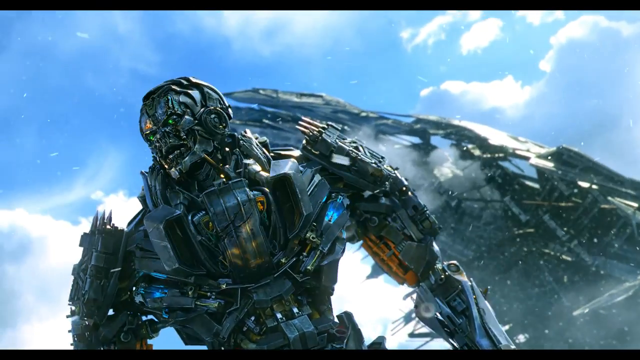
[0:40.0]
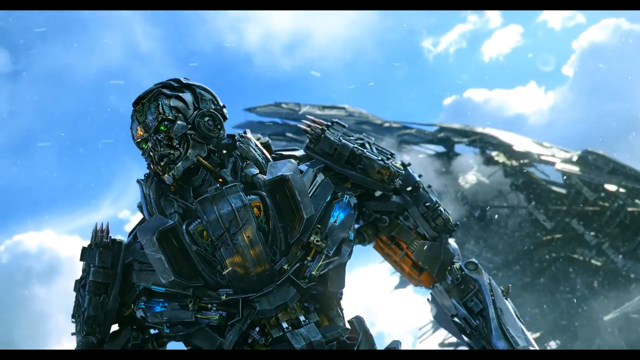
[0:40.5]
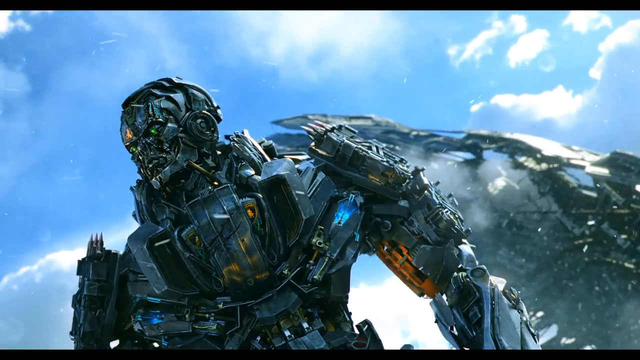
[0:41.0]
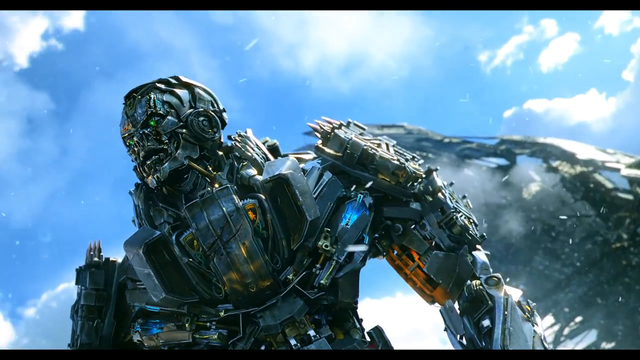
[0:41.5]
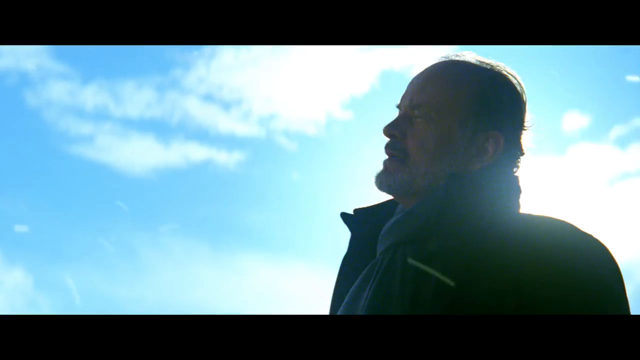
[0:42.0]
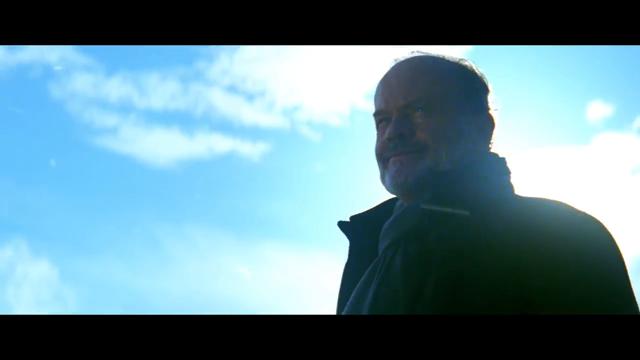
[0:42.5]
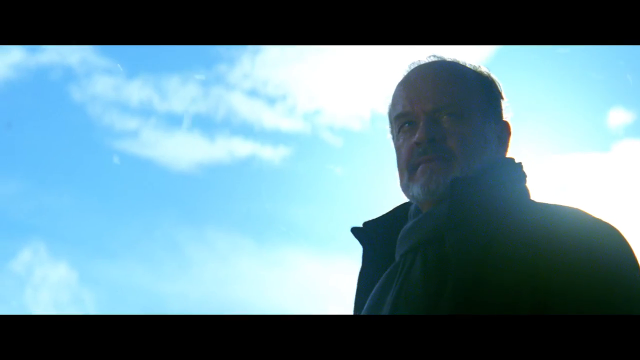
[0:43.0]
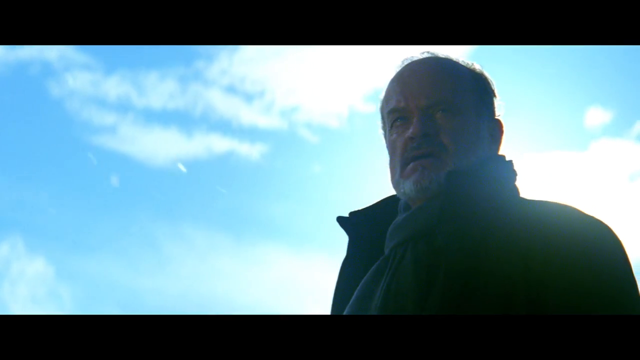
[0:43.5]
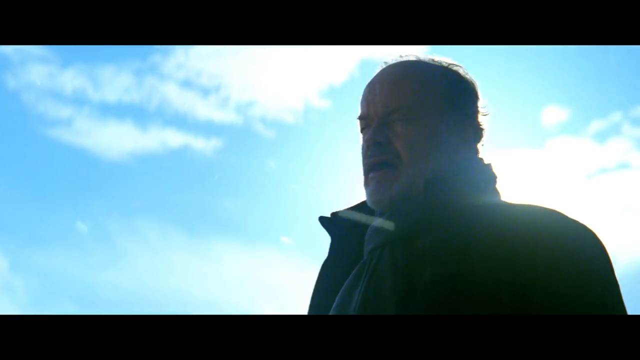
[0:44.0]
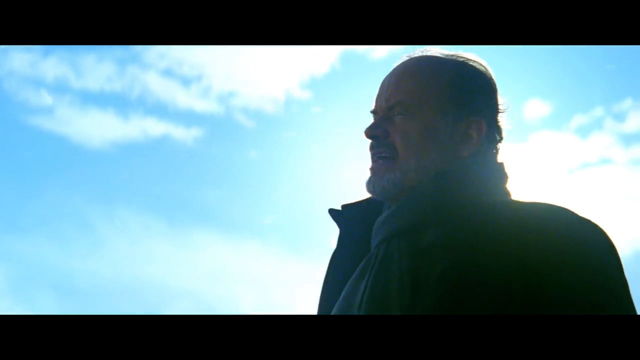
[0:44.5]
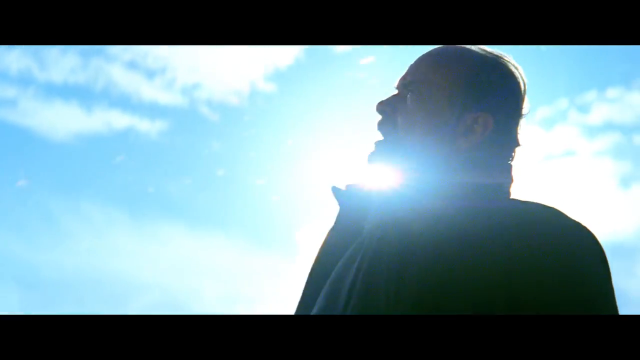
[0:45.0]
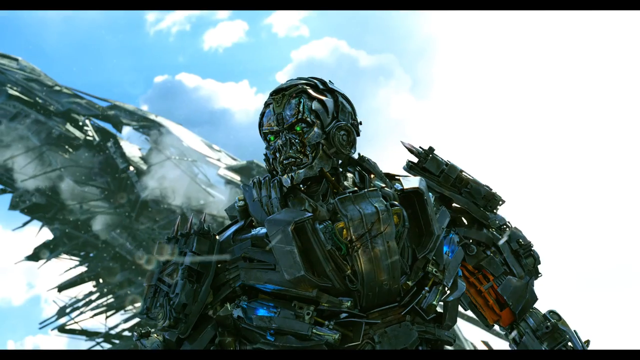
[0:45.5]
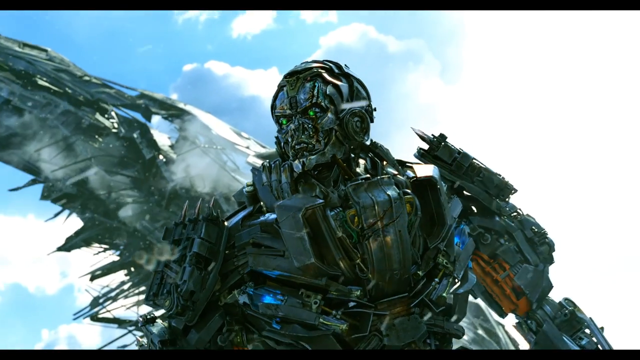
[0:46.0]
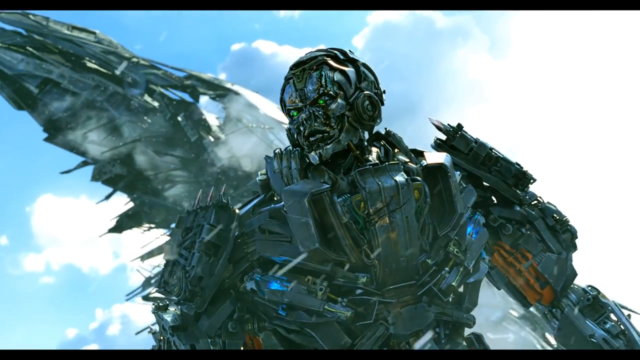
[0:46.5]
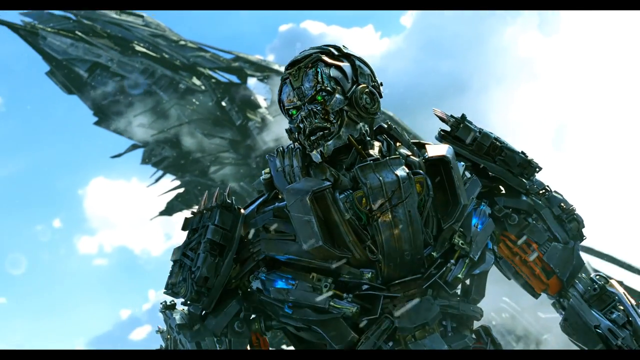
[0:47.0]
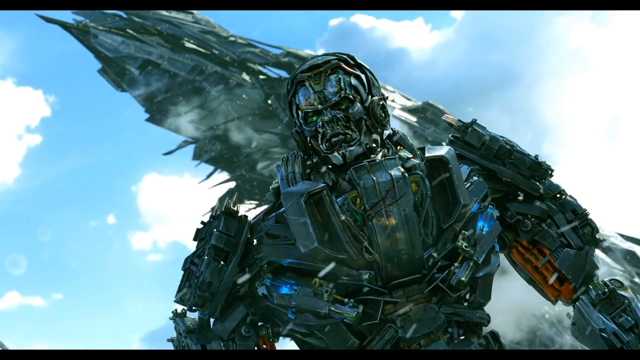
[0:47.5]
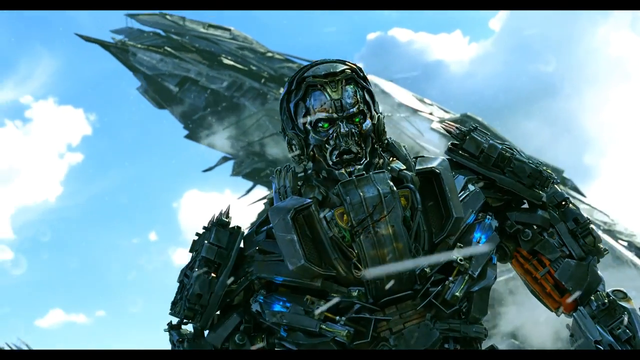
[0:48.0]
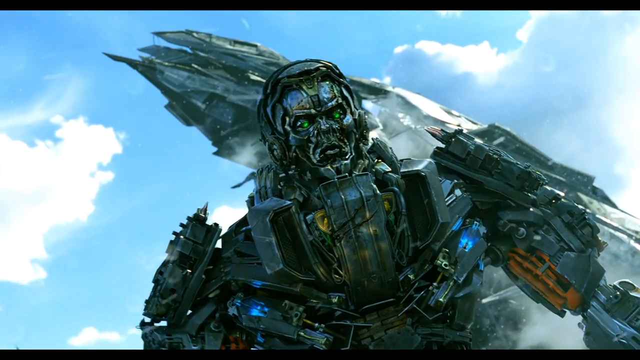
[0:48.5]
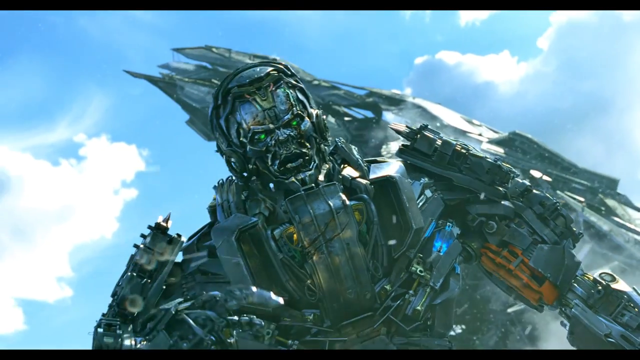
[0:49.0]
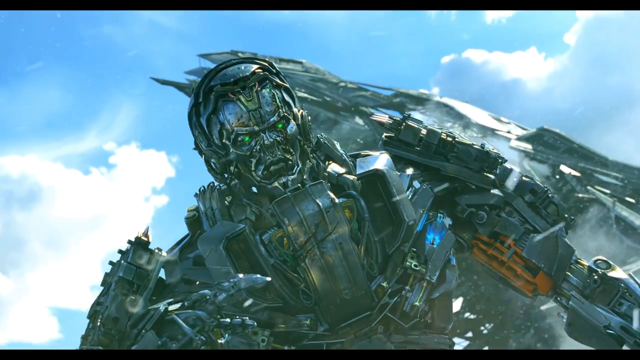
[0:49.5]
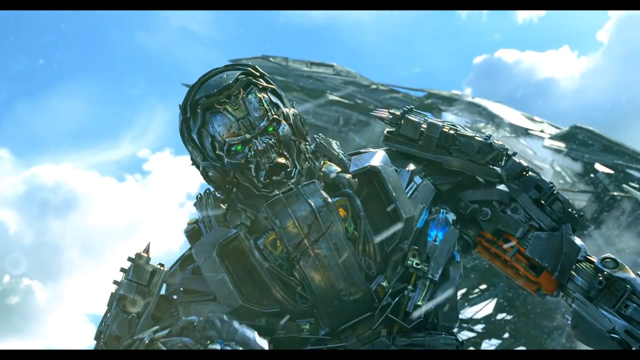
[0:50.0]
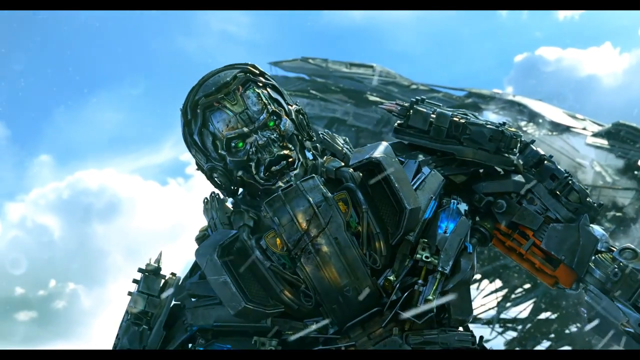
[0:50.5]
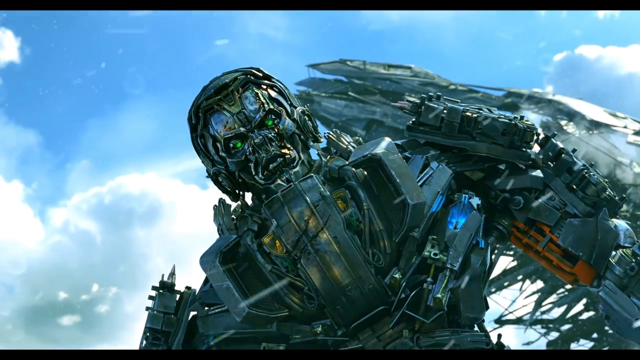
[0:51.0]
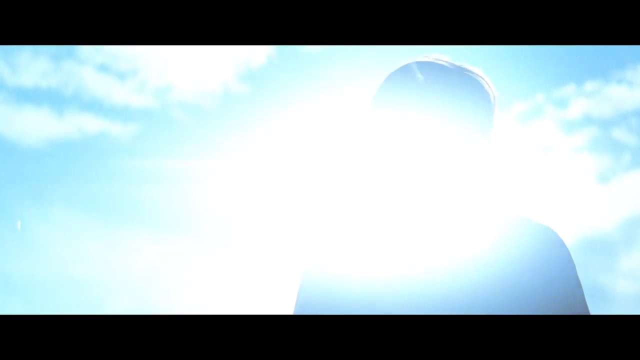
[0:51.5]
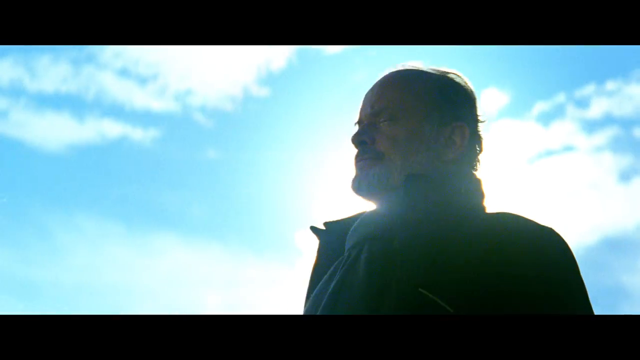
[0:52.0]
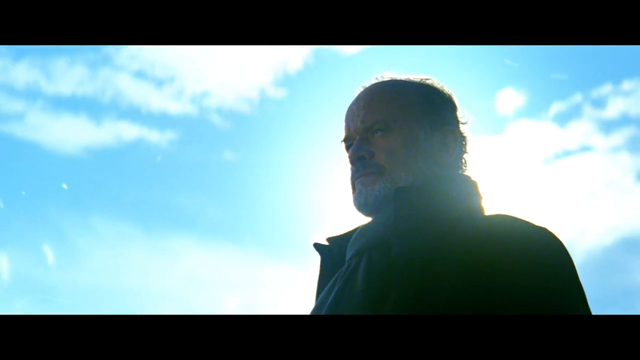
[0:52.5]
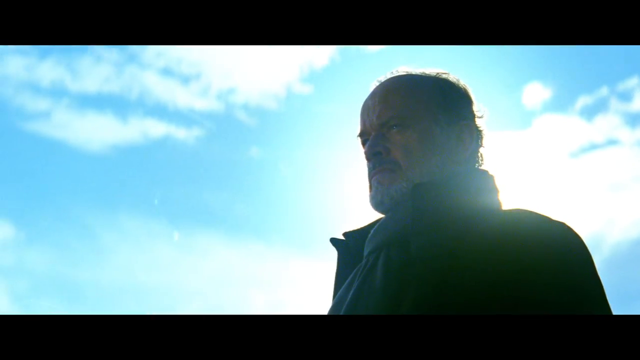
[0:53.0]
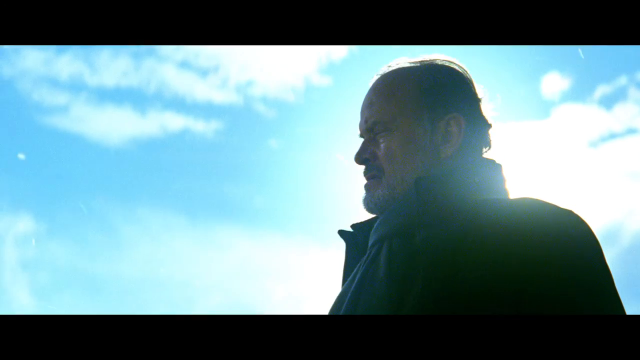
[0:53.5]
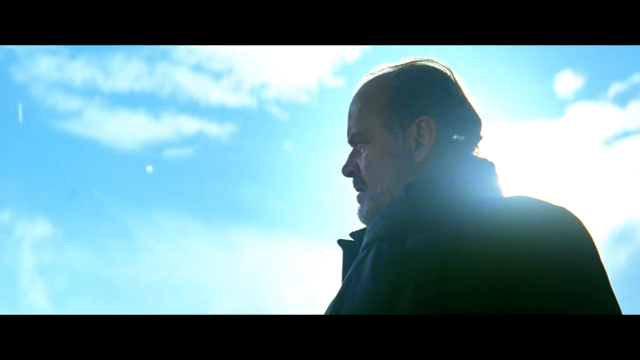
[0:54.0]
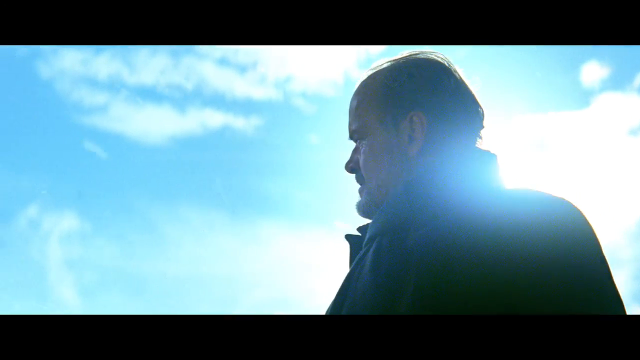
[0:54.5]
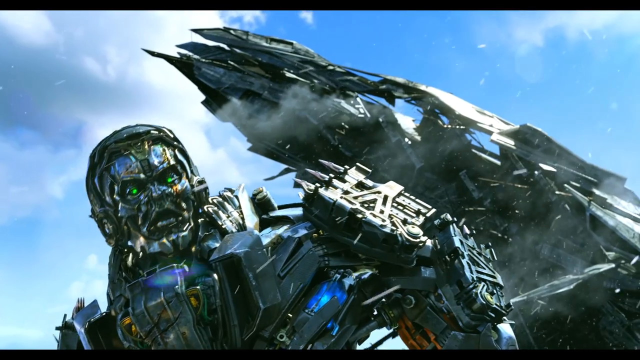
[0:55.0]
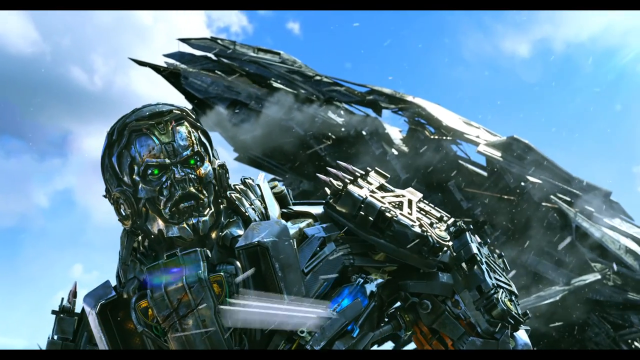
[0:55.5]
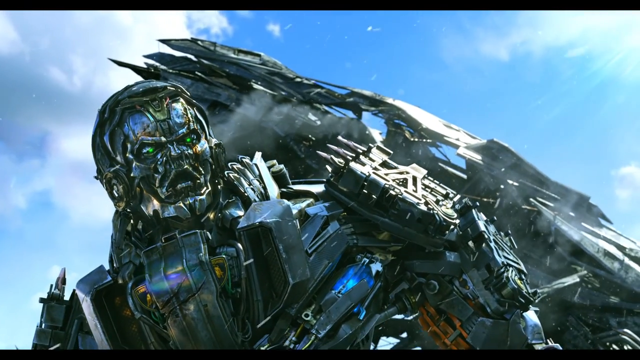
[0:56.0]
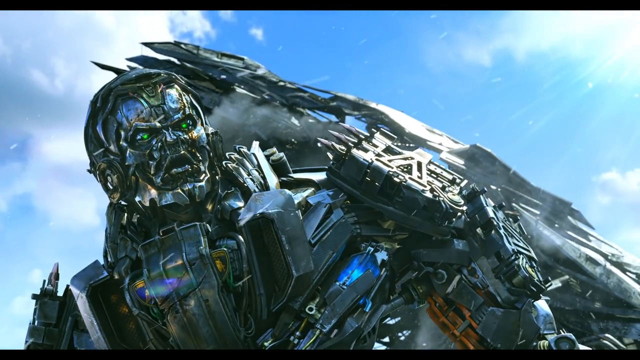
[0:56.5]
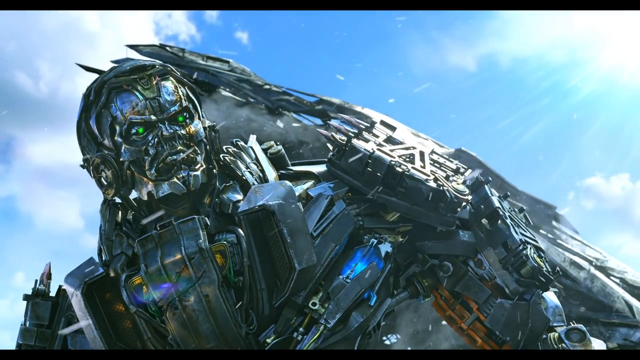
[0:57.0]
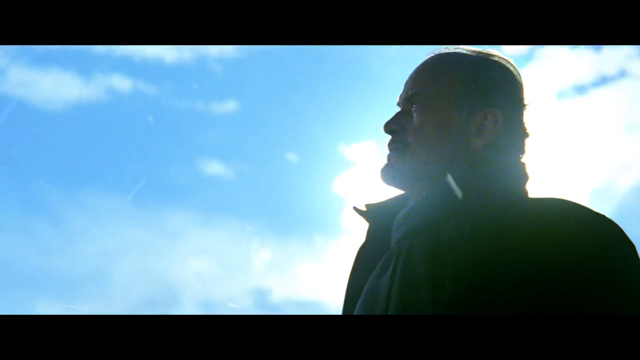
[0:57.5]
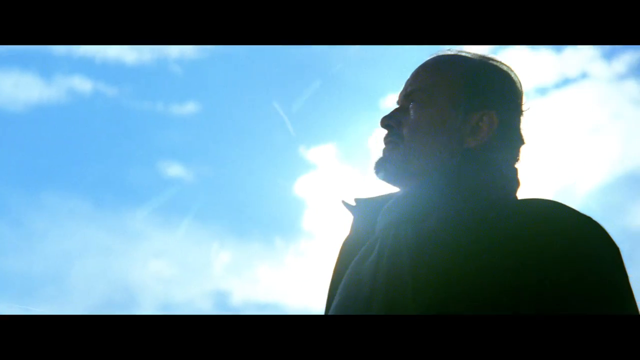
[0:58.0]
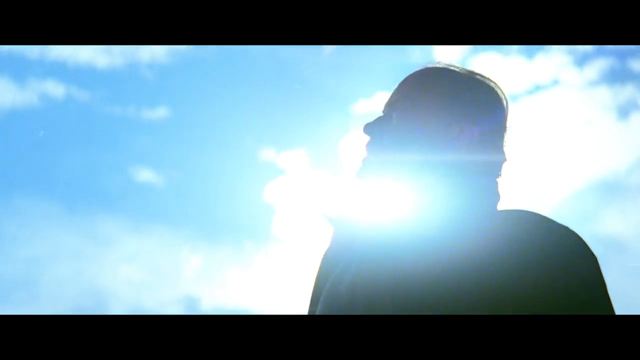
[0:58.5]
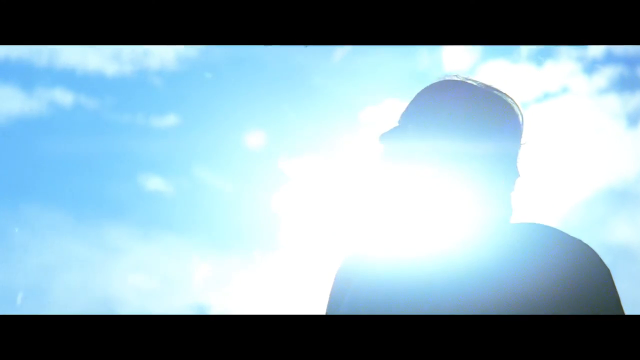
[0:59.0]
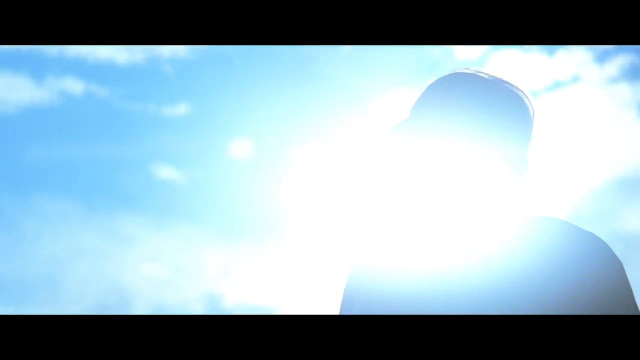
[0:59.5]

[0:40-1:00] The robot-like alien talks to the man. The robot has green eyes, a lot of different parts on his body, a big chest, big arms and a tiny waist. They are surrounded by snow in a cold place and by the ruins of the spaceship. The man has an exasperated look; he does not look straight at the alien but looks around, annoyed and irritated. The alien looks very angry and talks angrily to the man, possibly about something that went wrong on the spaceship. The man is standing right in front of the sun, and the glare hides his face.